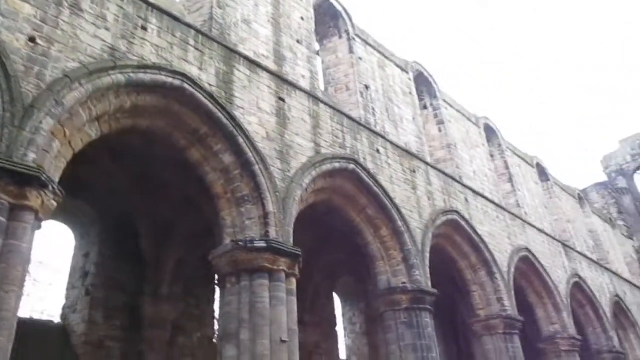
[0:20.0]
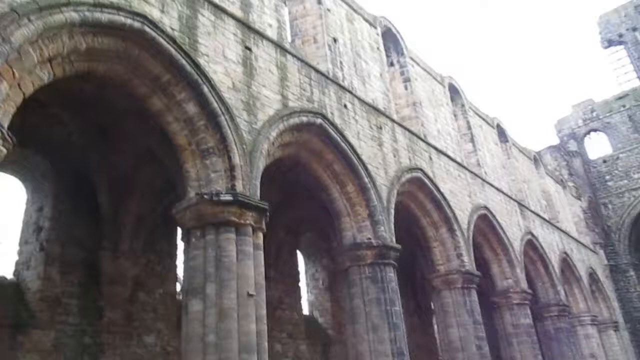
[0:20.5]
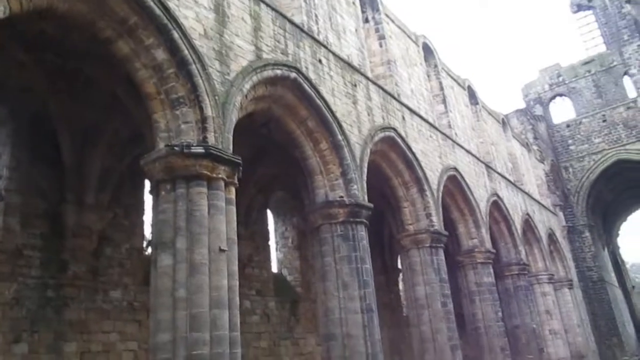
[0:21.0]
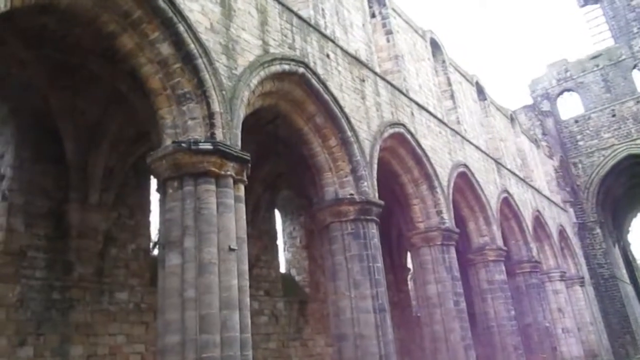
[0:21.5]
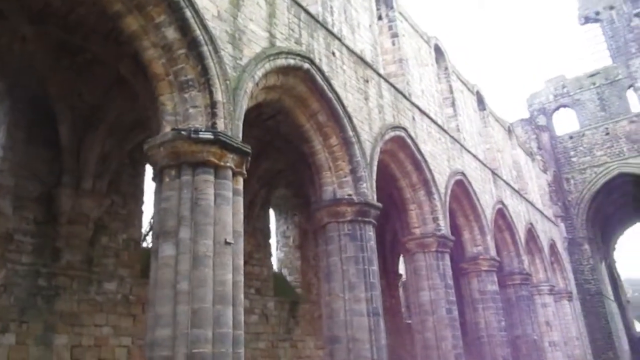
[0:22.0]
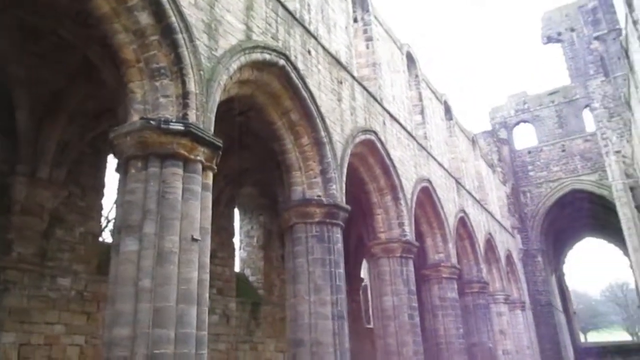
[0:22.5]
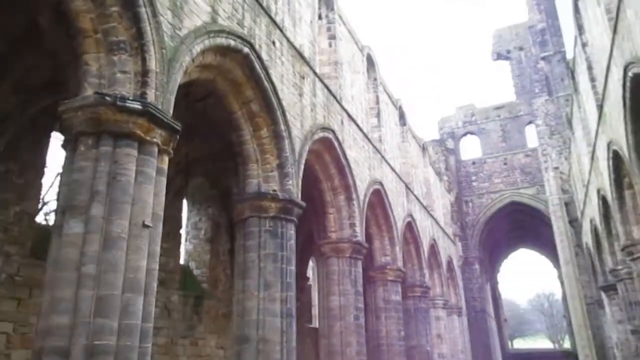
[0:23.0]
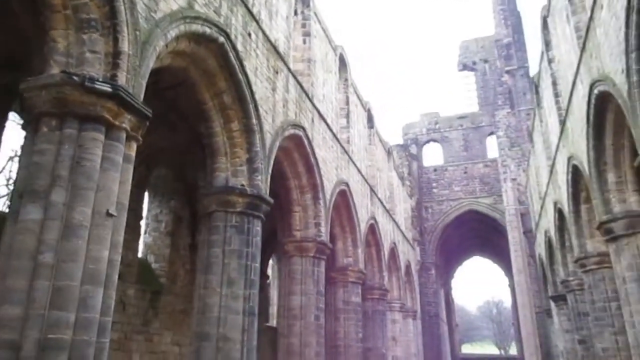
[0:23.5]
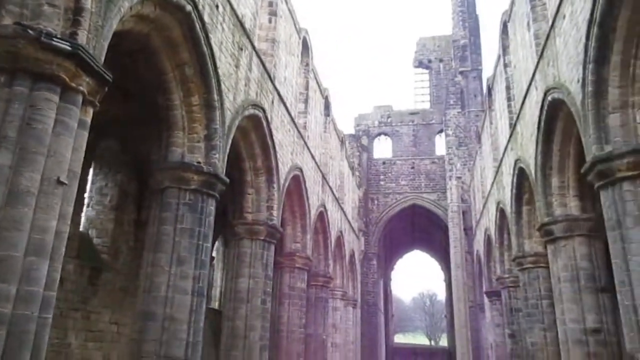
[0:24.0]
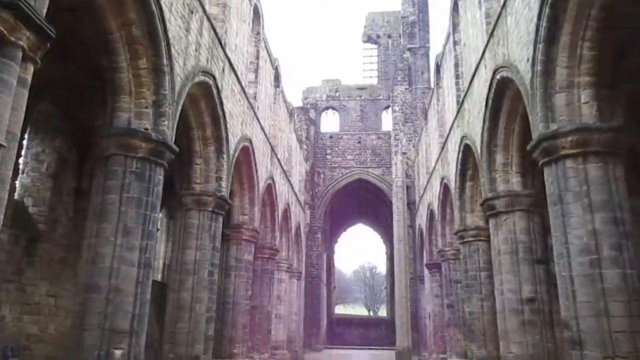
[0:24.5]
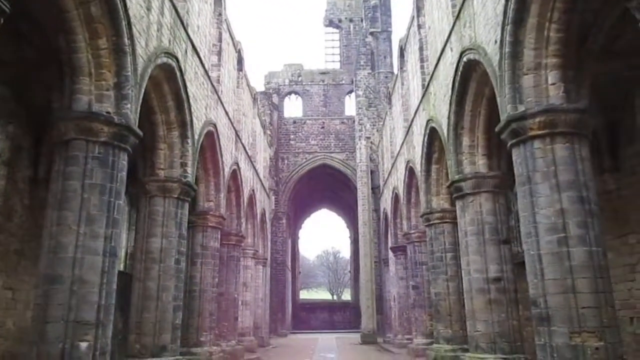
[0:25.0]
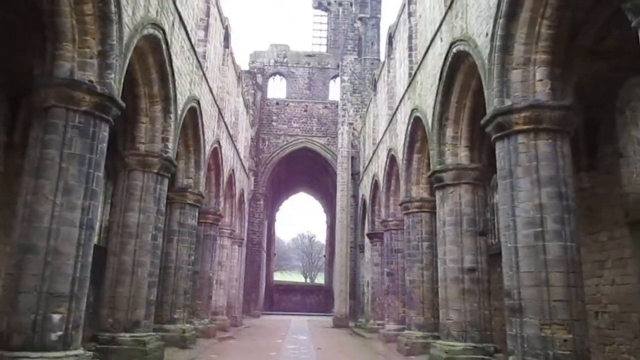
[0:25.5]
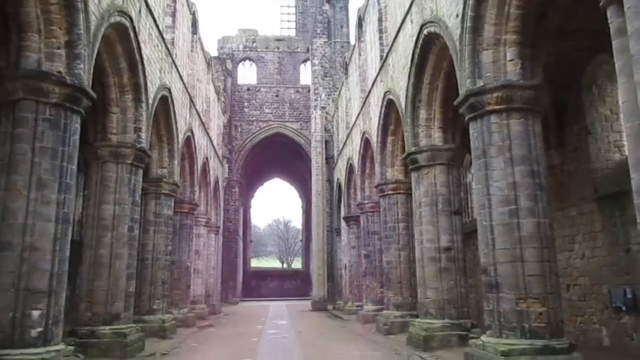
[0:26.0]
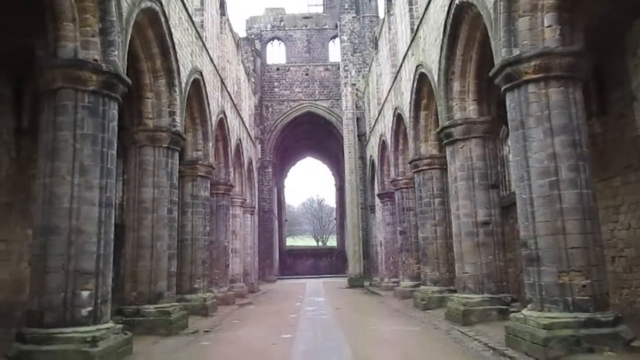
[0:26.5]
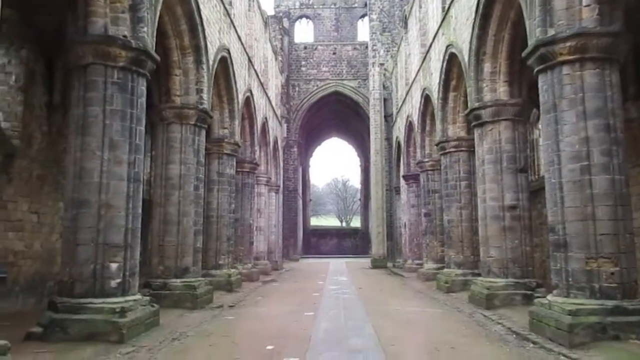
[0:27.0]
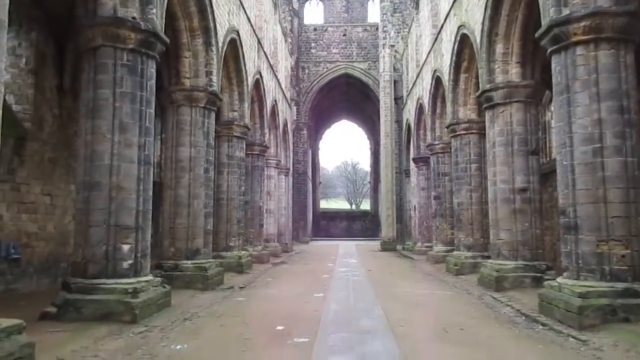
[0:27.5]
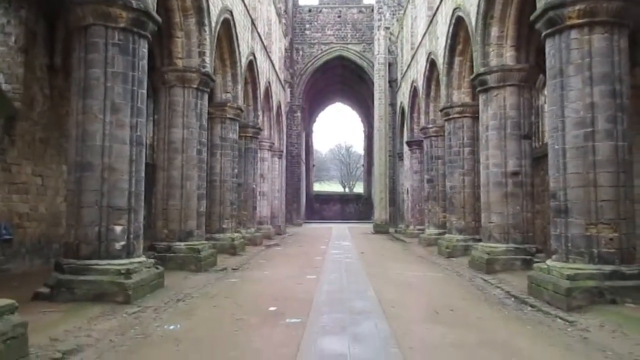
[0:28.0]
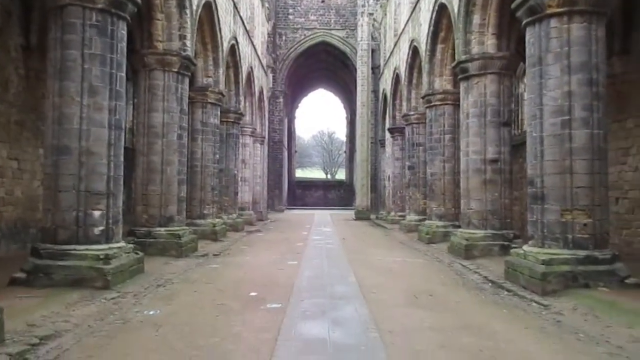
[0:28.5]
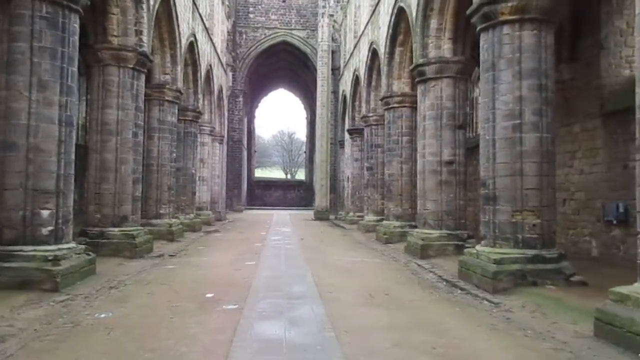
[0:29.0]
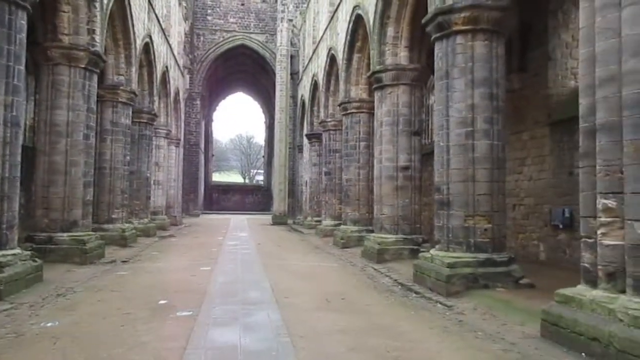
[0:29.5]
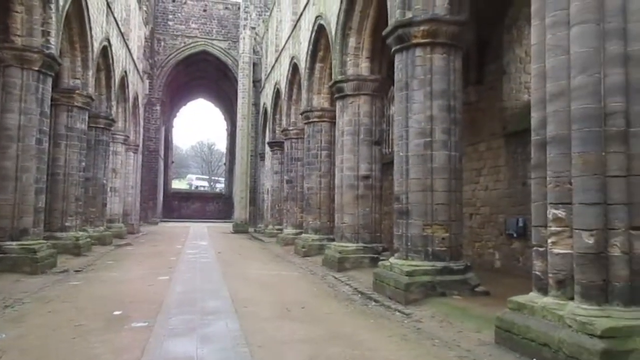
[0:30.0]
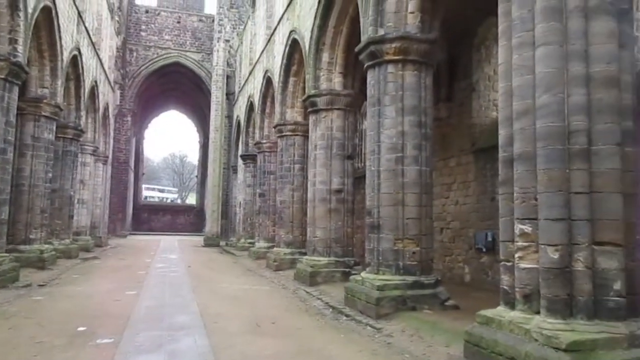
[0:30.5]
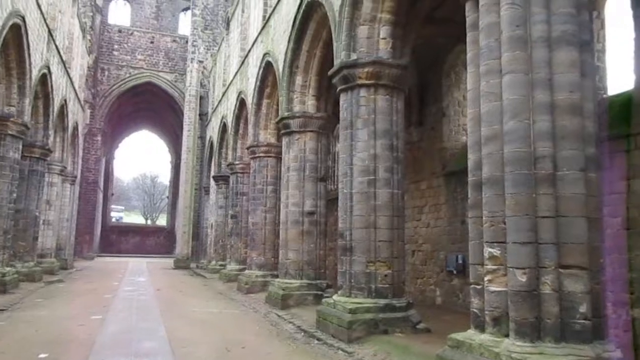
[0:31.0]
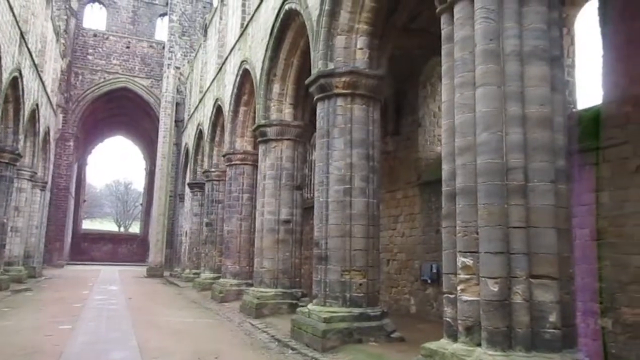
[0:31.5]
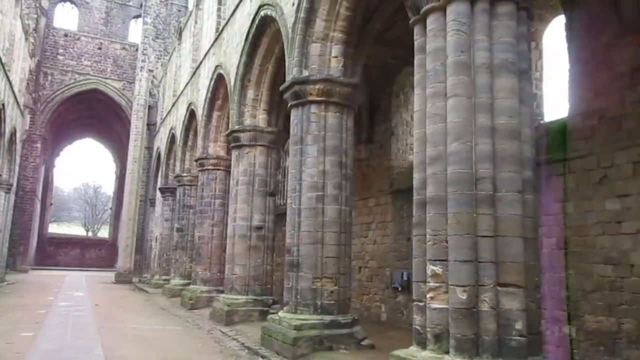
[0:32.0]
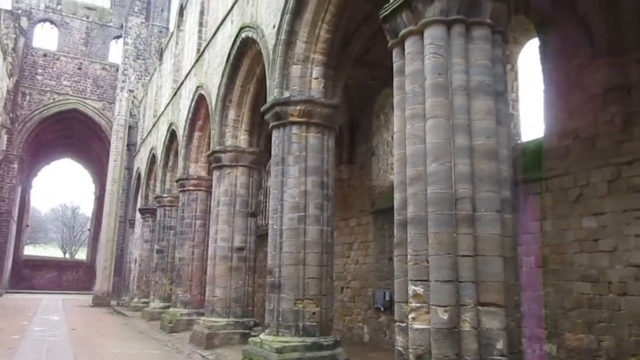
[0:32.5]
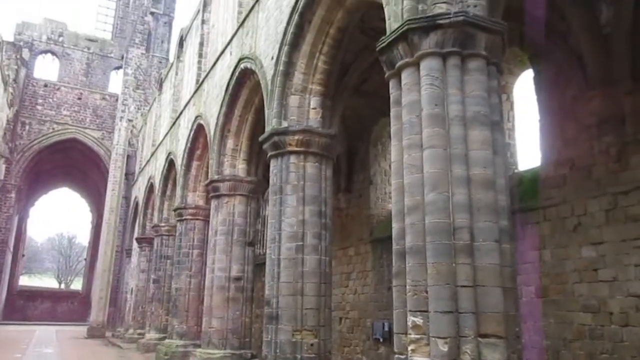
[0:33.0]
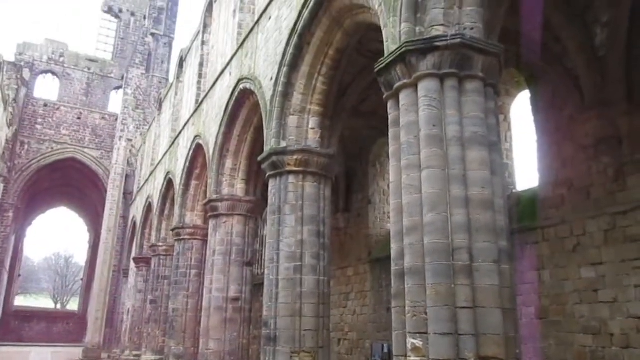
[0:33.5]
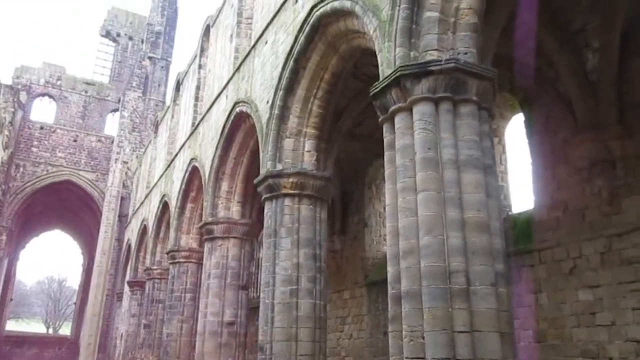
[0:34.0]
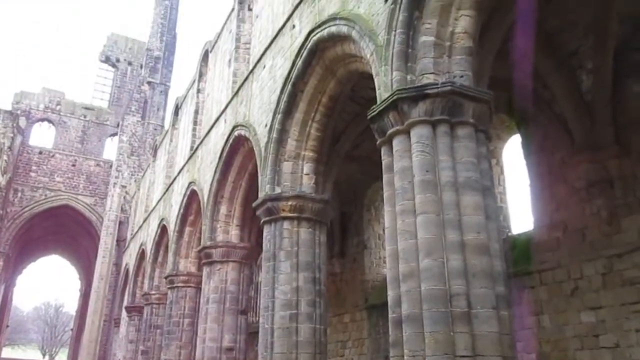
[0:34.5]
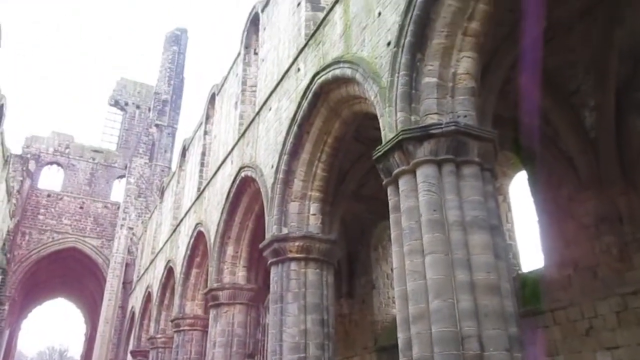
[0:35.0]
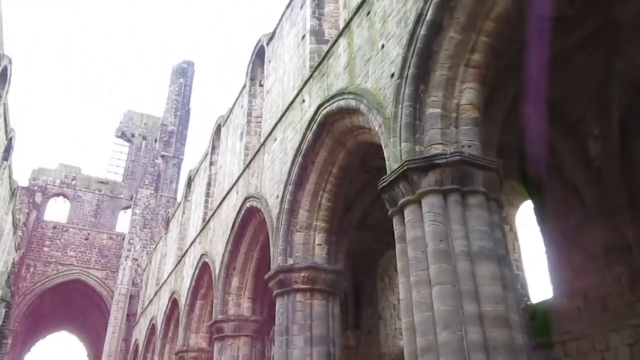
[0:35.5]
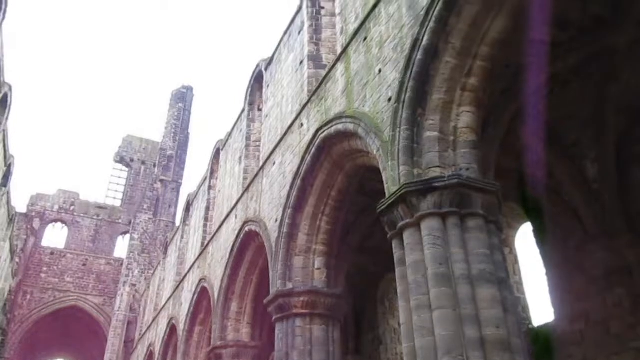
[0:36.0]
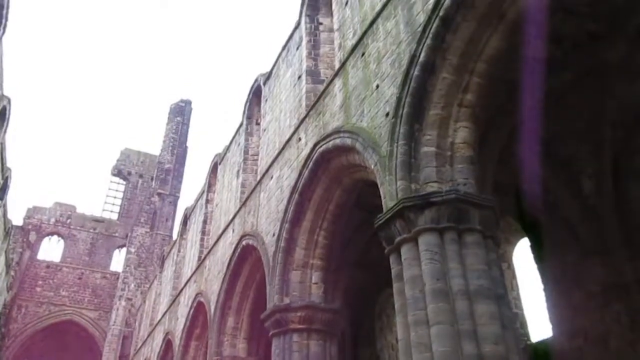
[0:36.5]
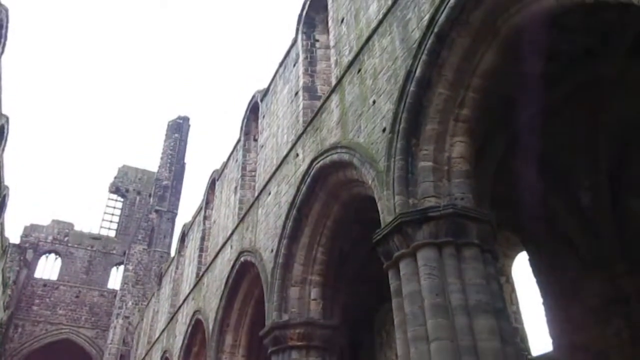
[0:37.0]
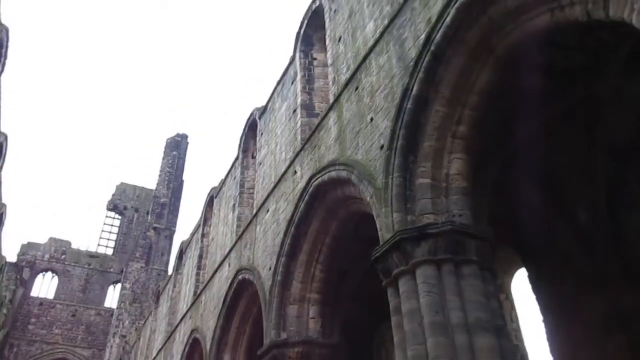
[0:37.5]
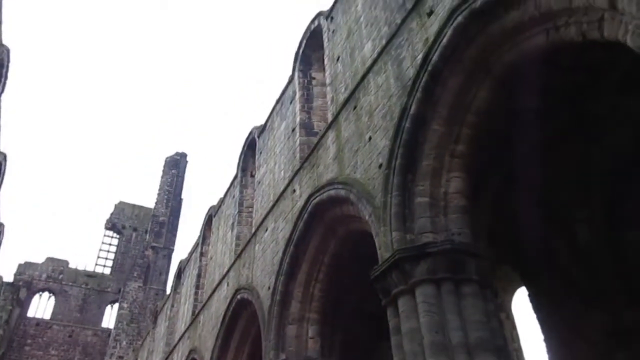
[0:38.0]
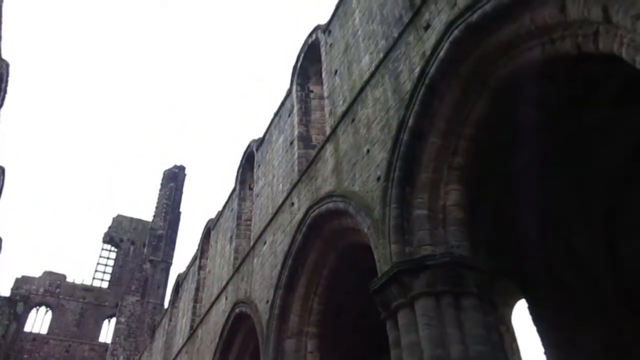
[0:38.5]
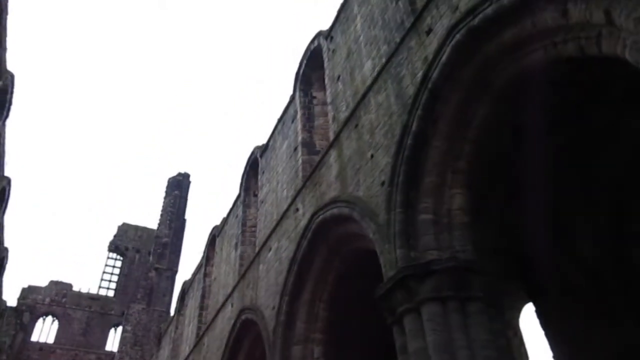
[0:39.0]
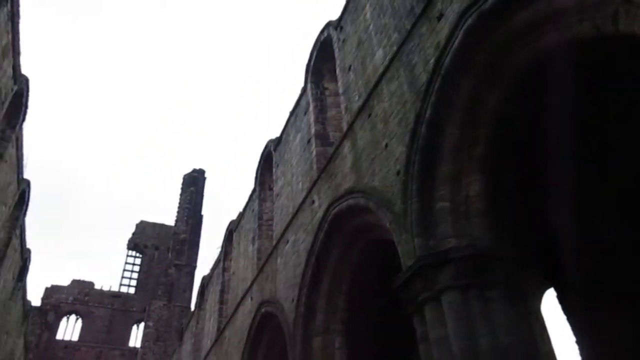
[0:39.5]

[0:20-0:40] The camera continues panning to the right alongside the mirror structure on the left side. It eventually reaches a large archway leading to the open area that appears to be some sort of gate. There is a wall above the archway with two arched windows; the structure is somewhat lopsided and is higher on the right side. The camera points directly toward the gate, which leads outside to what appears to be a large open area with some trees and denser woods in the background. The floor below appears to be made of stone, with a thin strip of gray along the center and more brown stone to the left and right of it. The pillars have multiple chips in them and appear quite aged. The camera pans back to the right and then up to show the top of the structure on the right, which looks similar to the structure on the left.